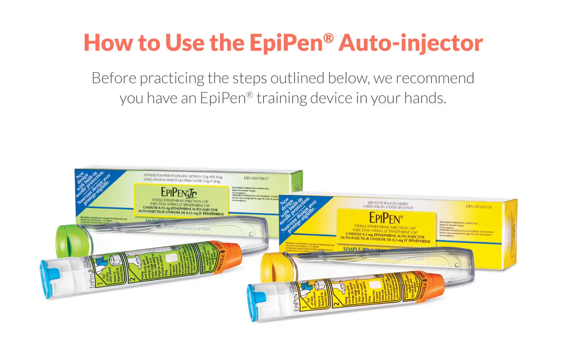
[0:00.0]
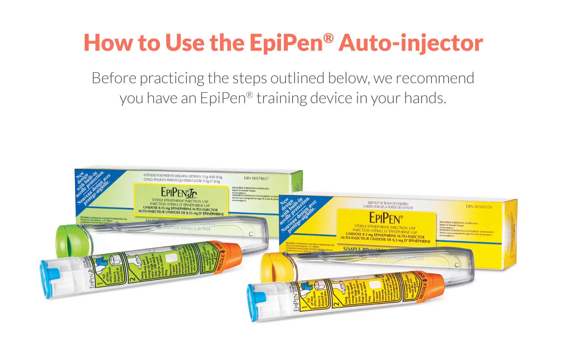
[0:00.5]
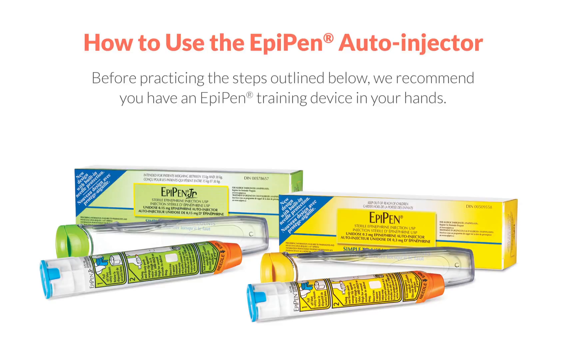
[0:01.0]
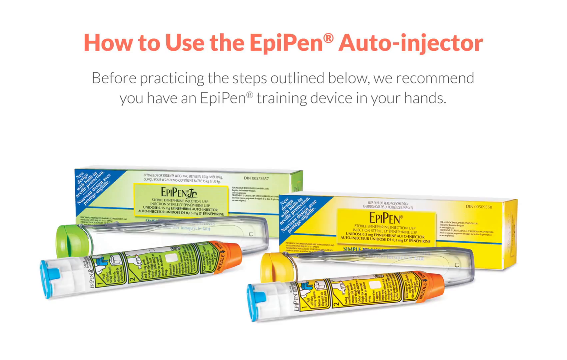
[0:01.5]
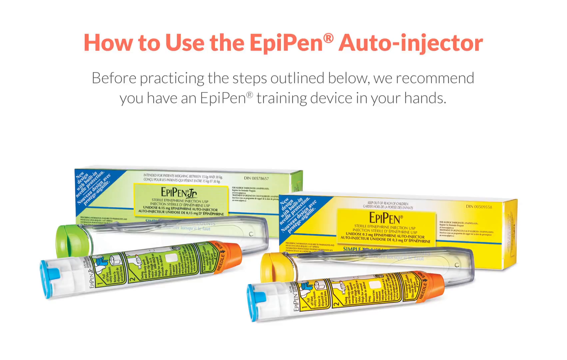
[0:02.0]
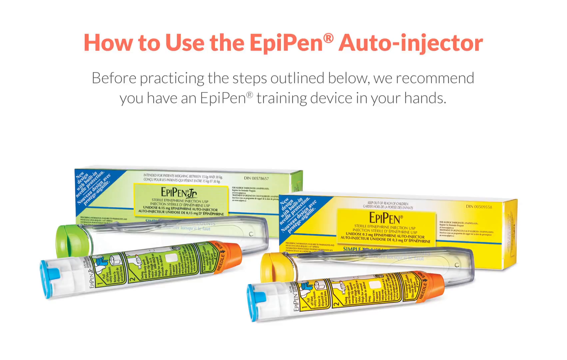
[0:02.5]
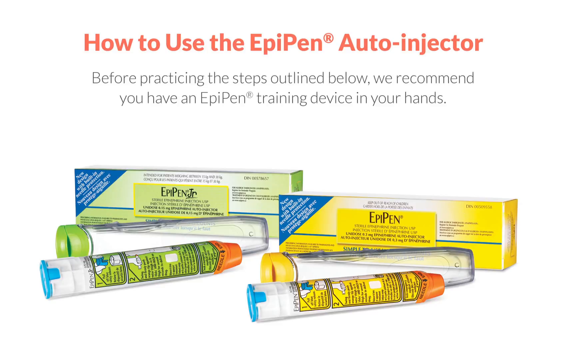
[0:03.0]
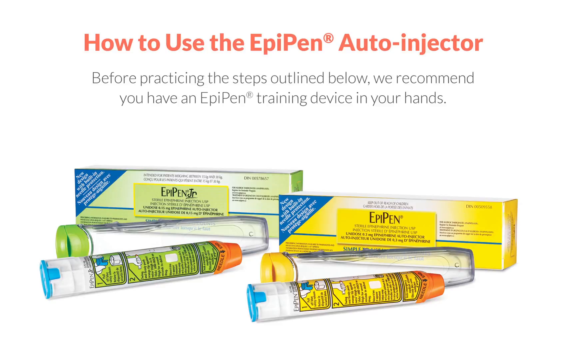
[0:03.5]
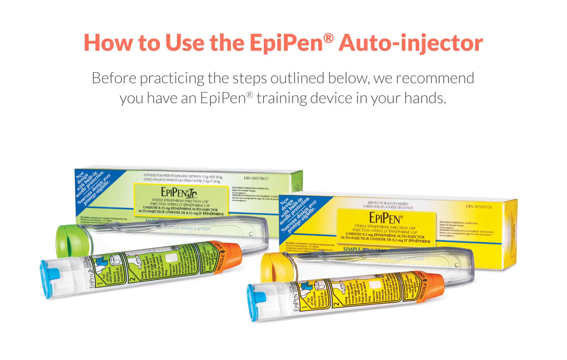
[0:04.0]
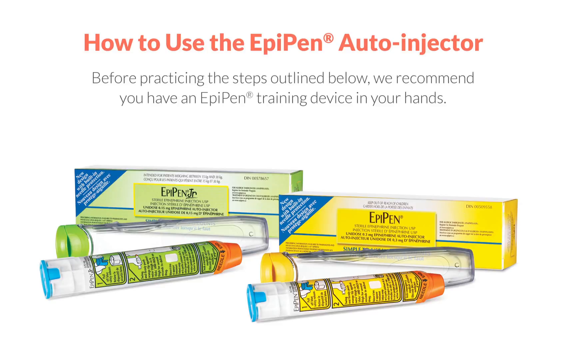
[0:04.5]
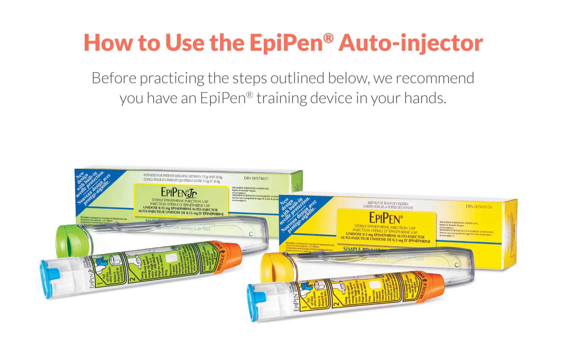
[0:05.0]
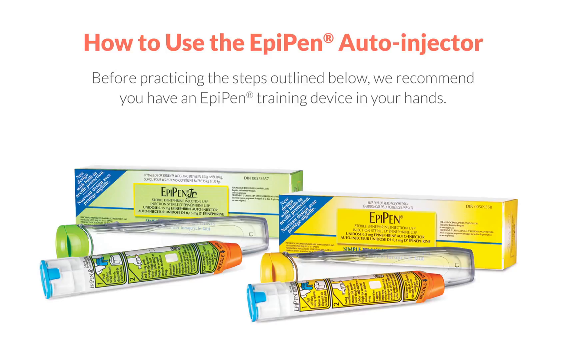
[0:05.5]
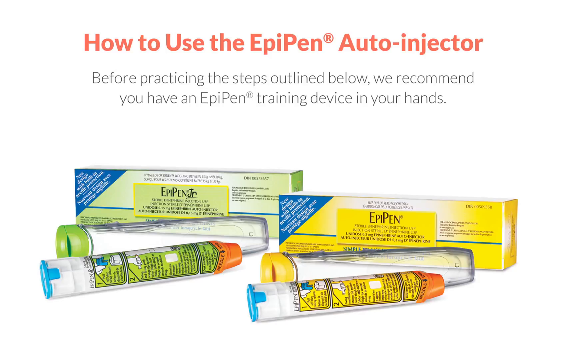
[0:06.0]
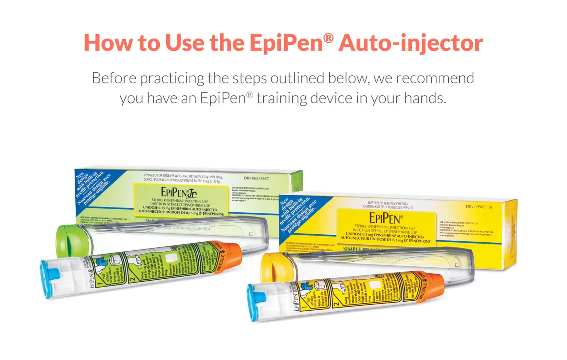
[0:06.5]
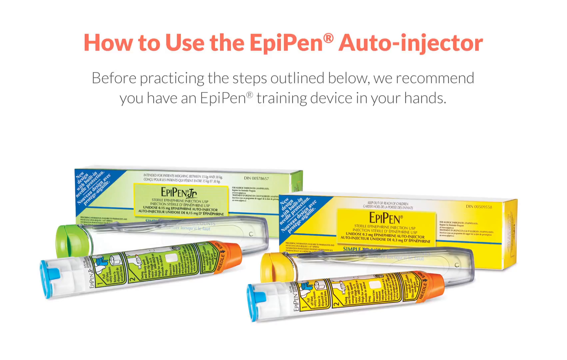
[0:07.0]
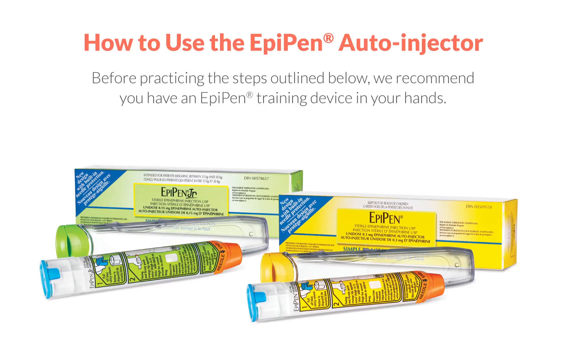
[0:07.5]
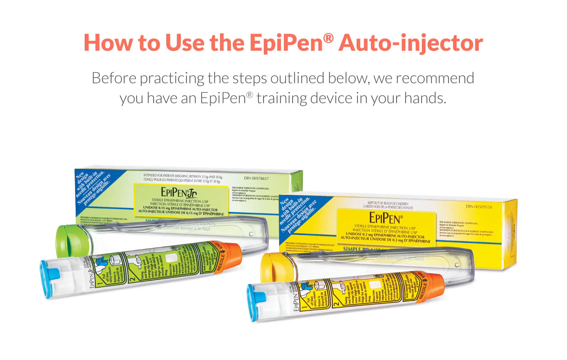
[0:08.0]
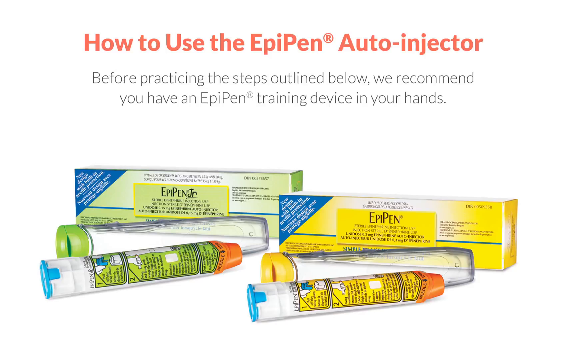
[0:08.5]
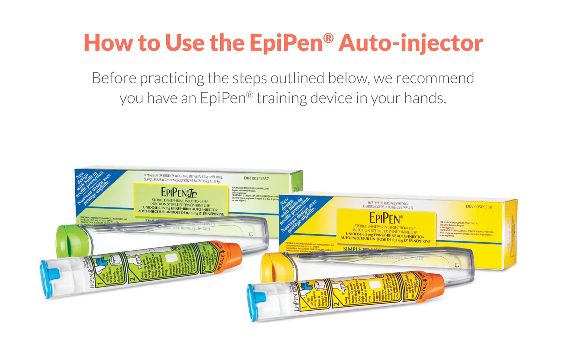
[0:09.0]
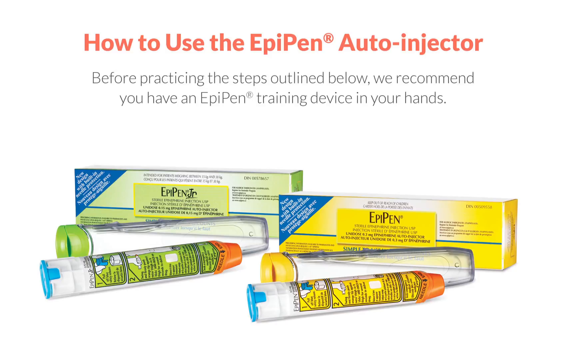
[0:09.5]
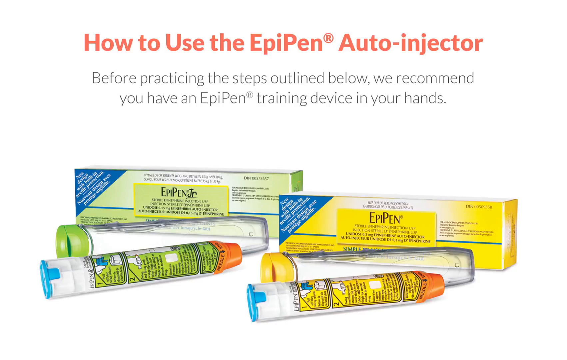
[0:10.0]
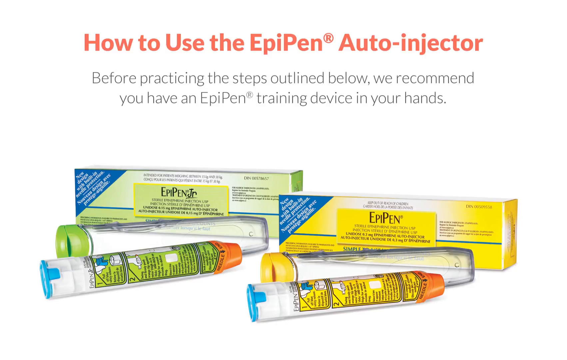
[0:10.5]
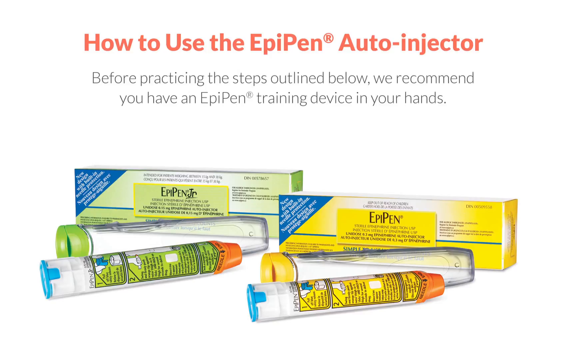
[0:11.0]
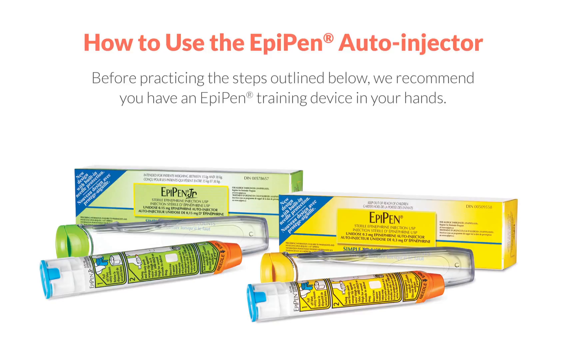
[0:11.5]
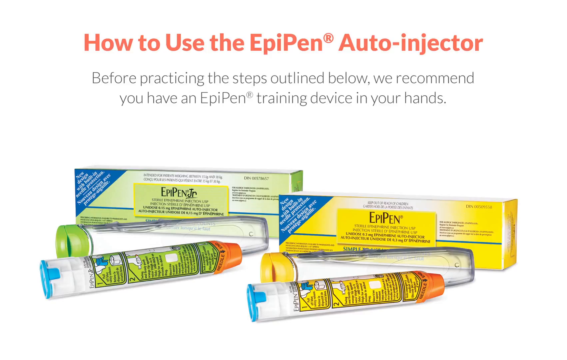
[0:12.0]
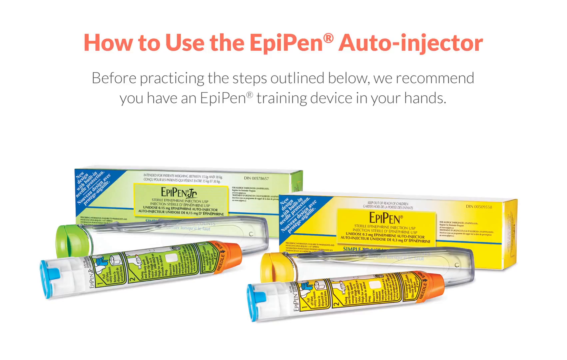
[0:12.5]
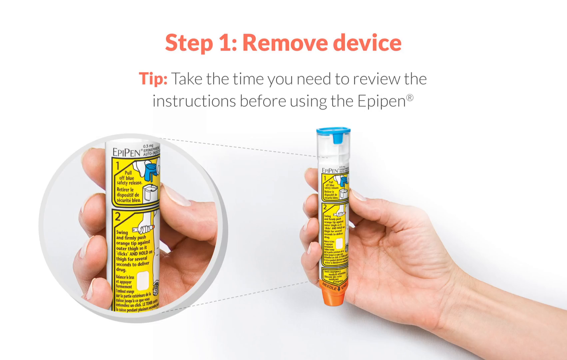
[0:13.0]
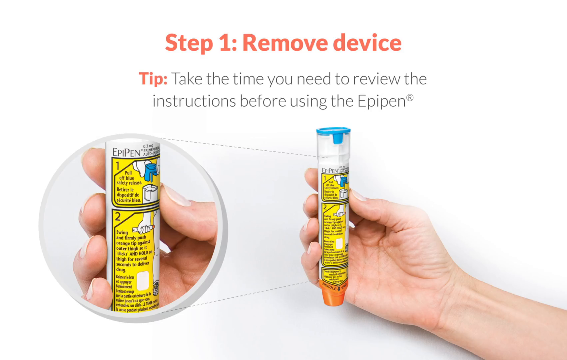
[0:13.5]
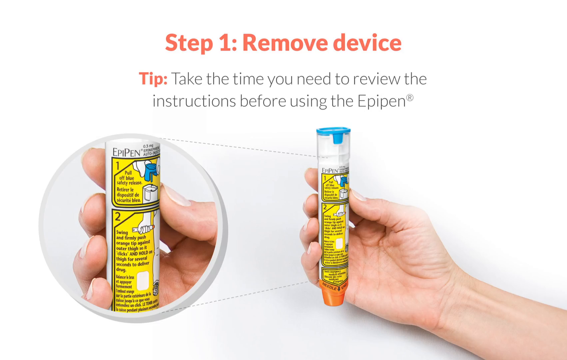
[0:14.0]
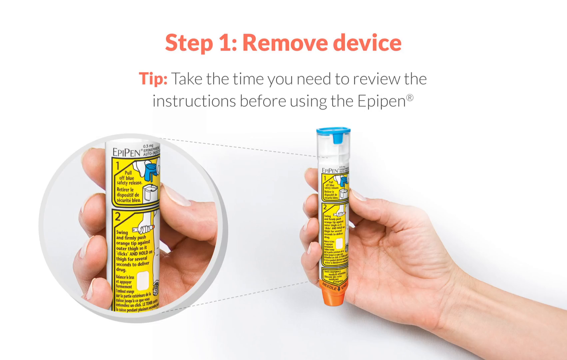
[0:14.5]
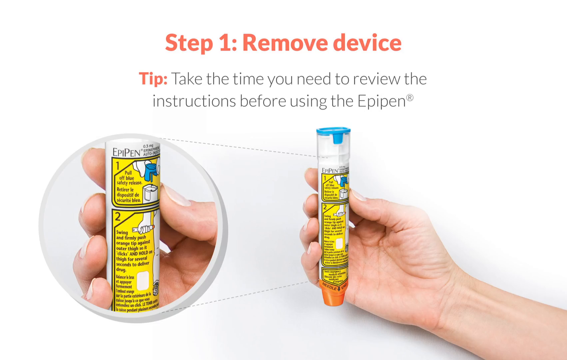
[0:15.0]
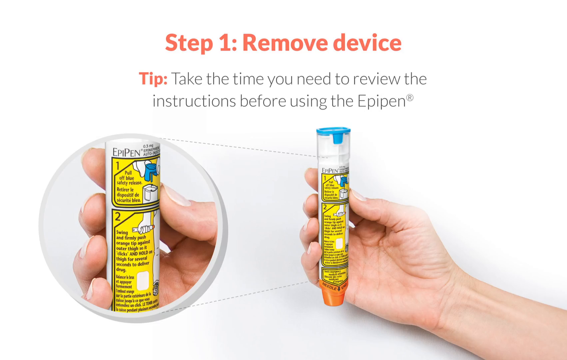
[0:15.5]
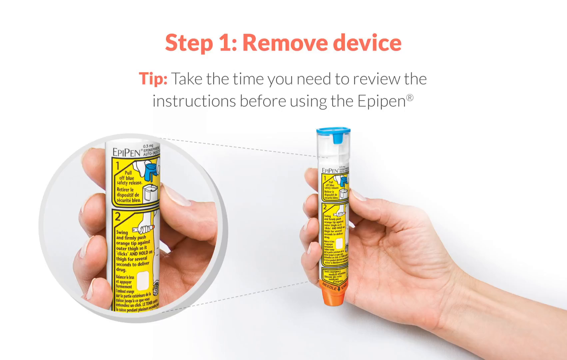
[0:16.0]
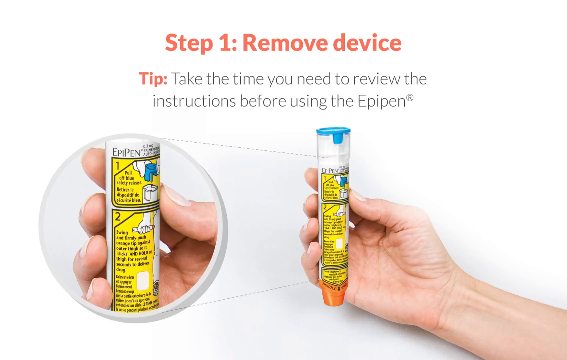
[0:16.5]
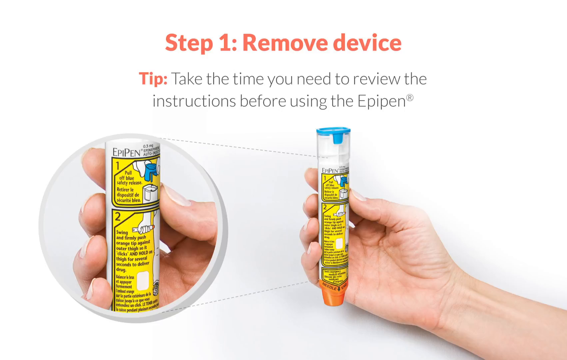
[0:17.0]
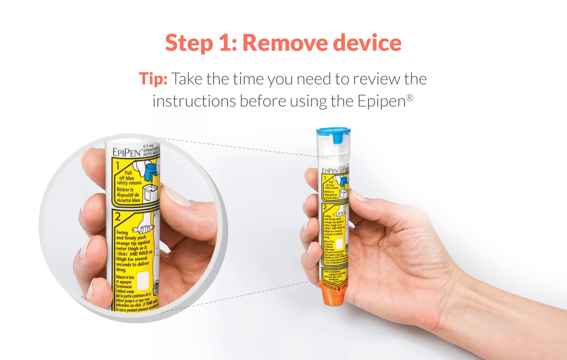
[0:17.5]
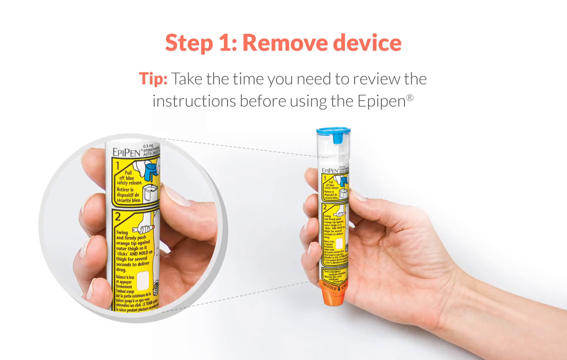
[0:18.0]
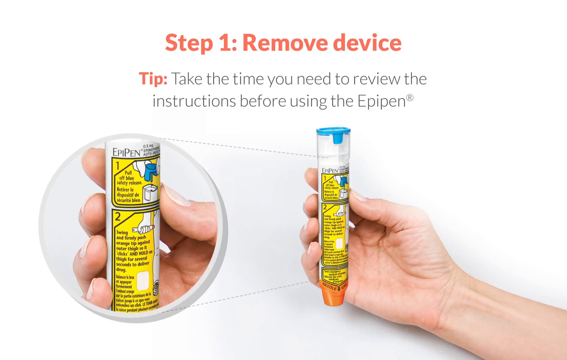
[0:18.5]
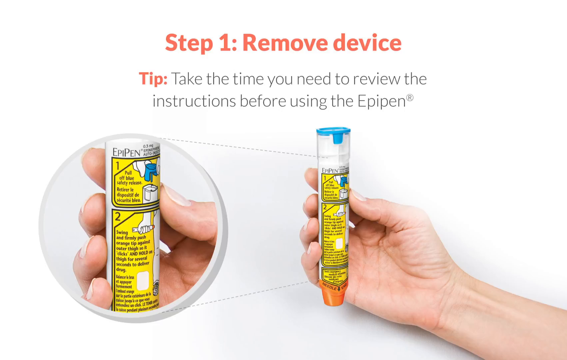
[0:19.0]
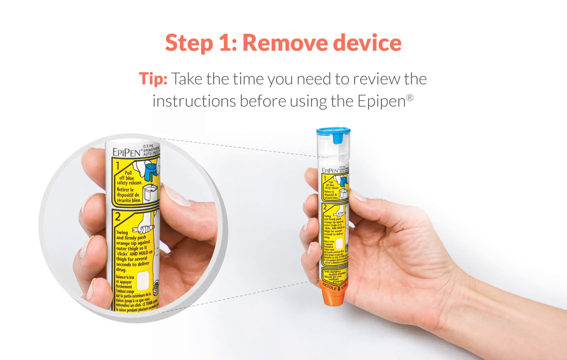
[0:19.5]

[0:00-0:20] The opening screen shows two EpiPen training devices. The slide's title, in bold orange font, reads "How to use the EpiPen auto injector." Below it, in a smaller black font, the text reads "Before practicing the steps outlined below, we recommend you have an EpiPen training device in your hands." One training device comes in a green package on the left and the other in a yellow package on the right; what is on the packages cannot be read, so the difference between them is unclear. For each, a box that is the pen's packaging is in the background, covered in descriptions and background information. In front of the box is a clear plastic holding container, and in front of that is the EpiPen itself. Each EpiPen is predominantly clear plastic, with a blue cap at one end and an orange cap at the other, and quite a bit of text and instructions in the middle about how it is to be used and disposed of.